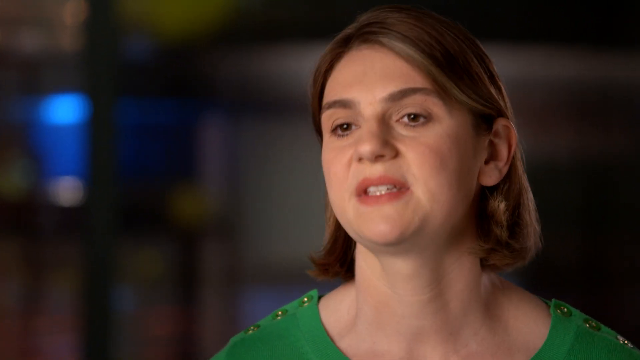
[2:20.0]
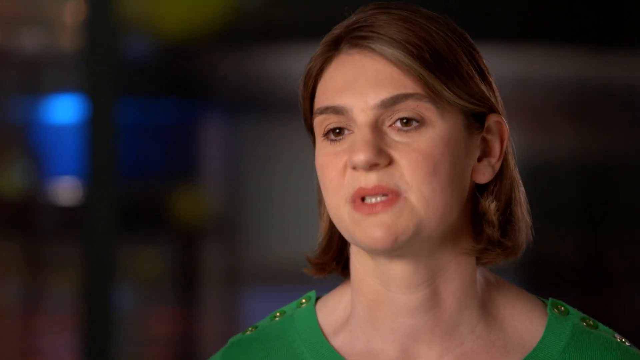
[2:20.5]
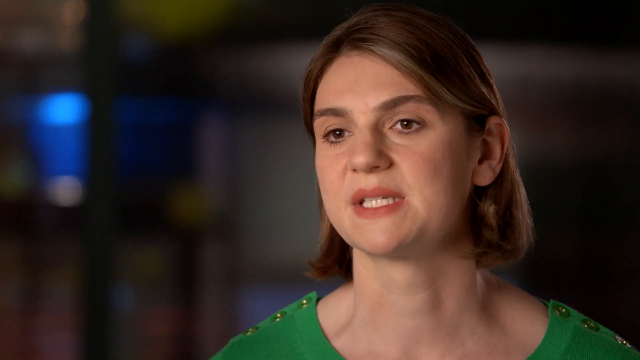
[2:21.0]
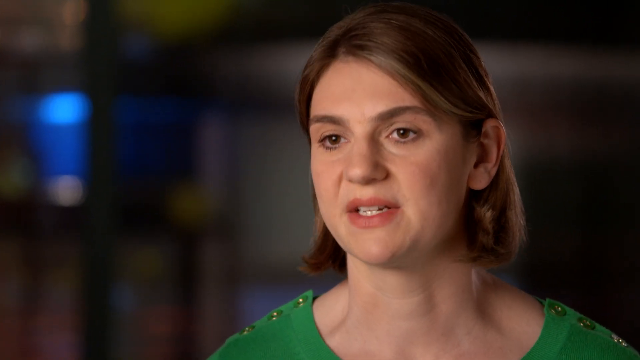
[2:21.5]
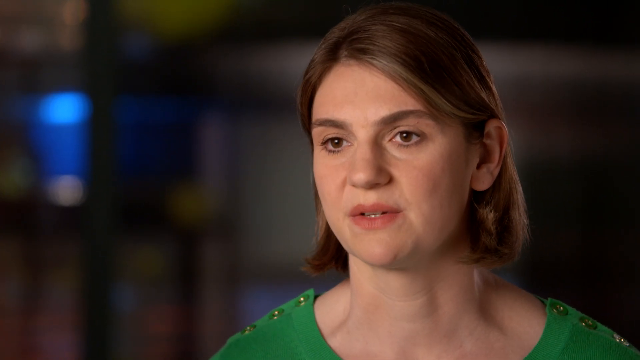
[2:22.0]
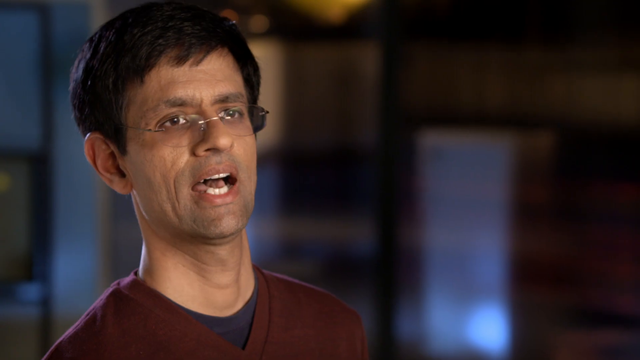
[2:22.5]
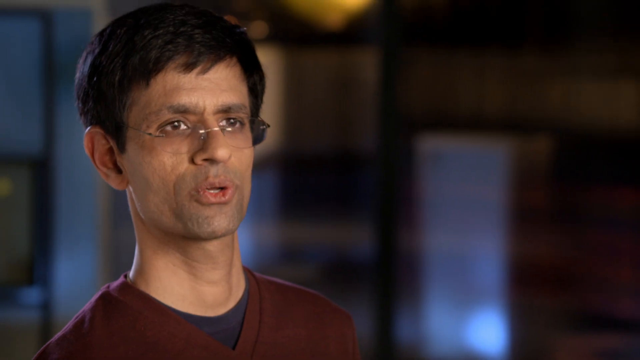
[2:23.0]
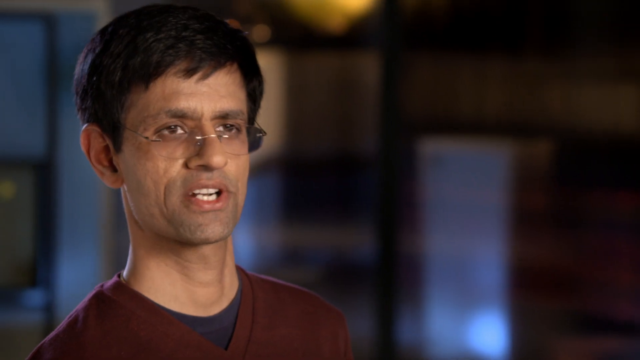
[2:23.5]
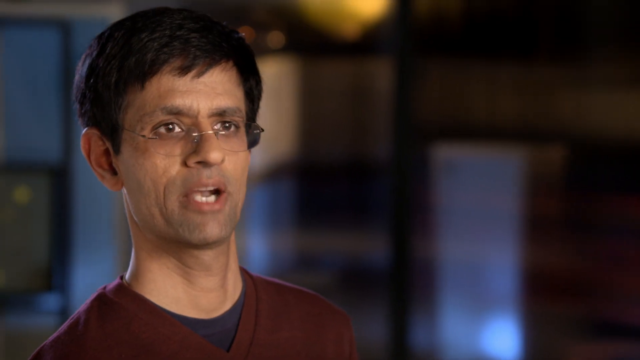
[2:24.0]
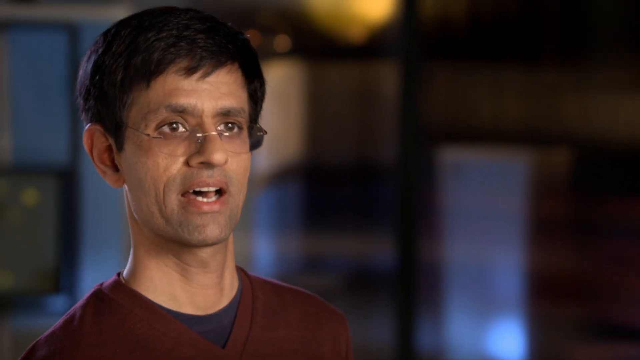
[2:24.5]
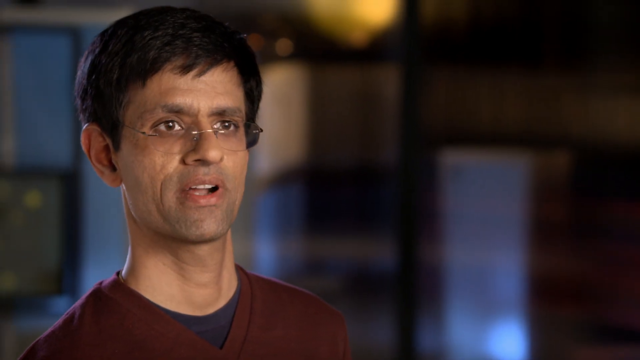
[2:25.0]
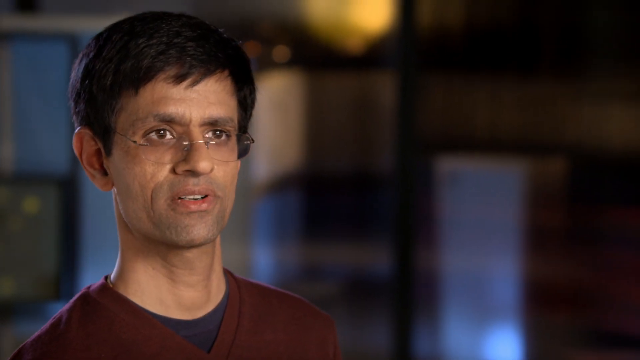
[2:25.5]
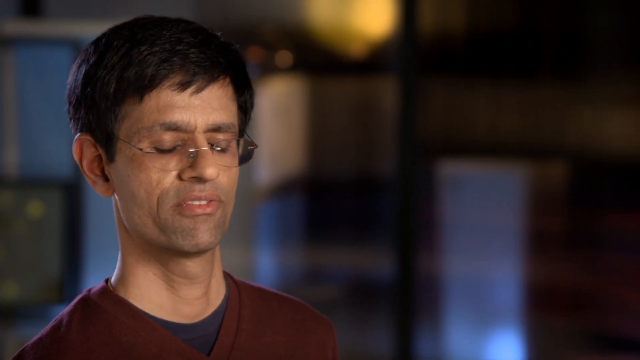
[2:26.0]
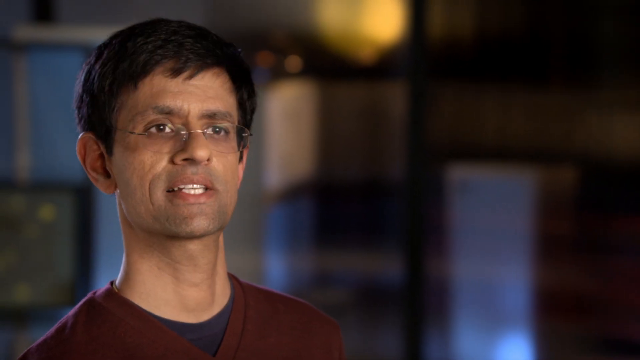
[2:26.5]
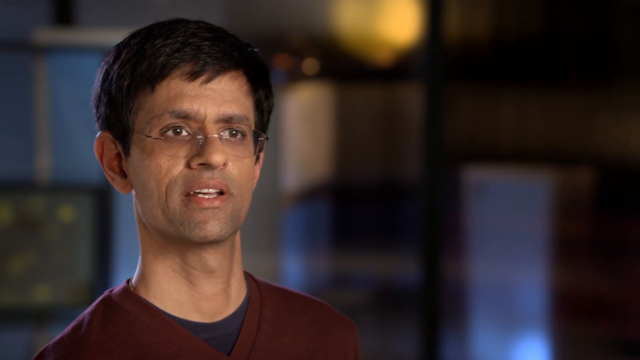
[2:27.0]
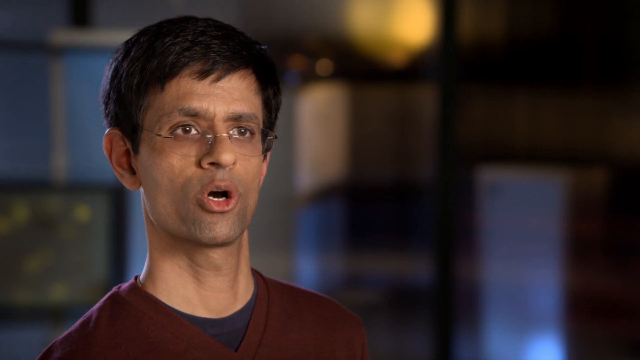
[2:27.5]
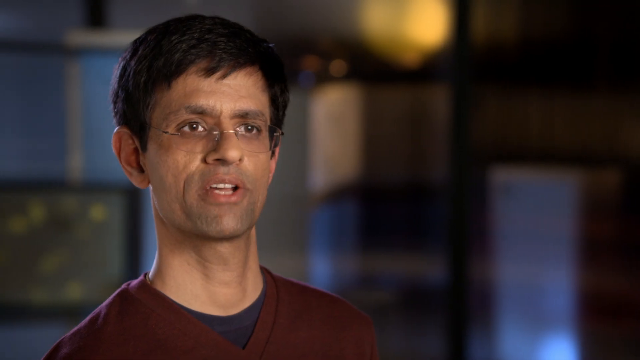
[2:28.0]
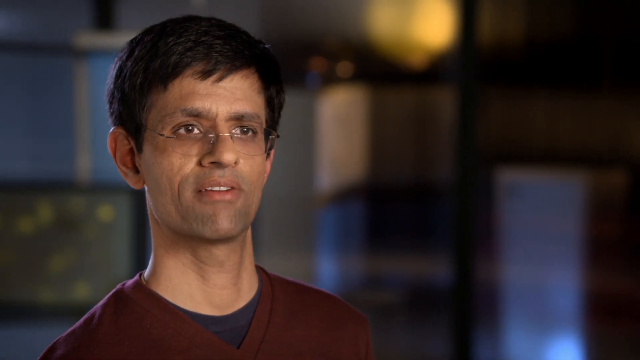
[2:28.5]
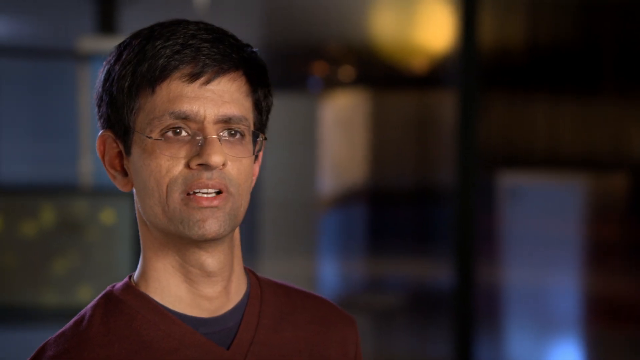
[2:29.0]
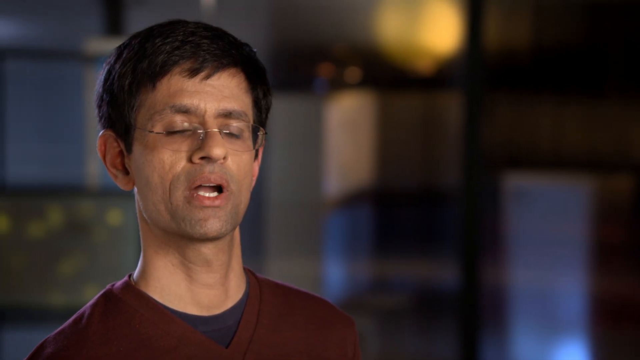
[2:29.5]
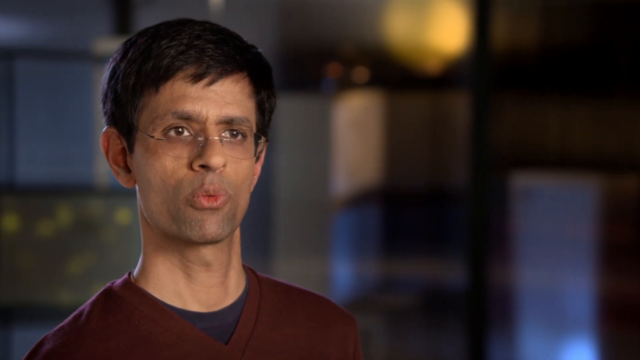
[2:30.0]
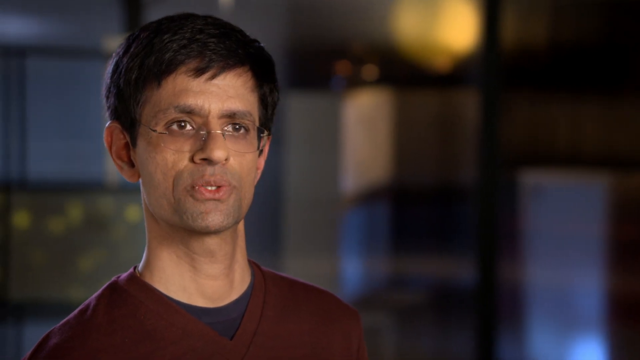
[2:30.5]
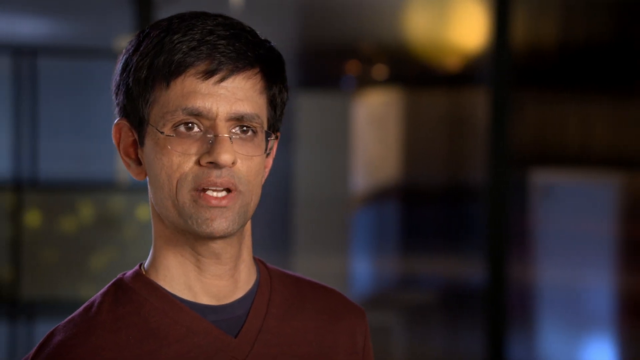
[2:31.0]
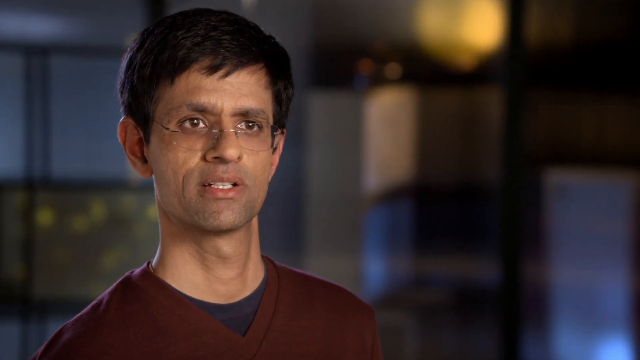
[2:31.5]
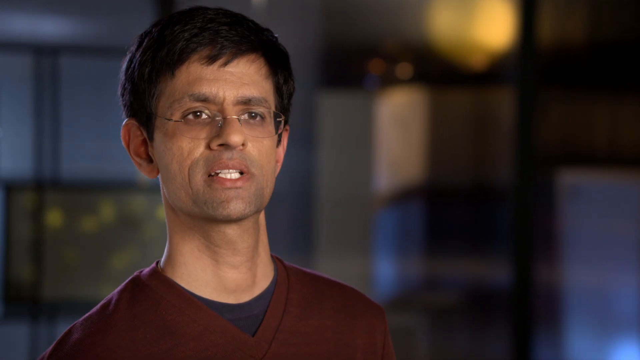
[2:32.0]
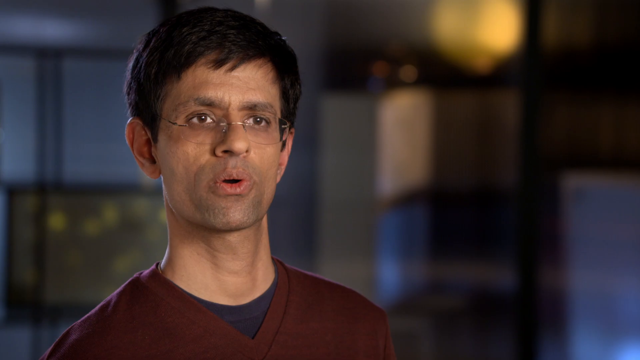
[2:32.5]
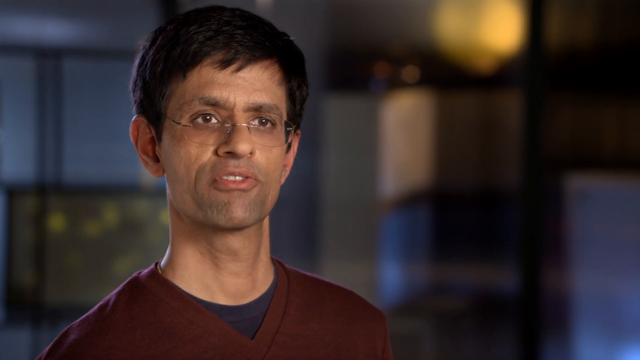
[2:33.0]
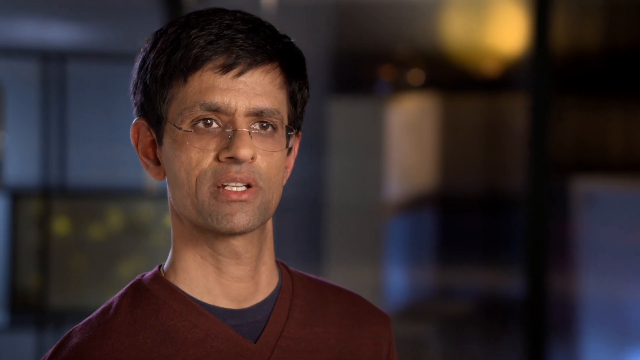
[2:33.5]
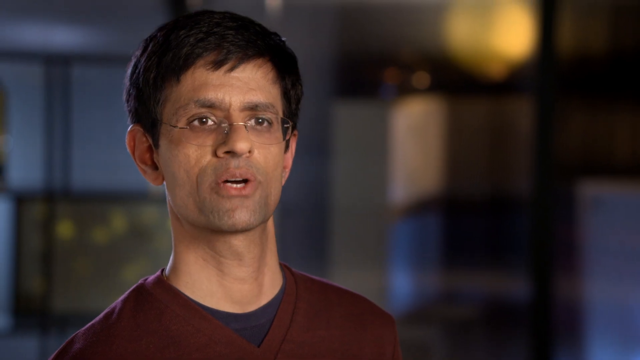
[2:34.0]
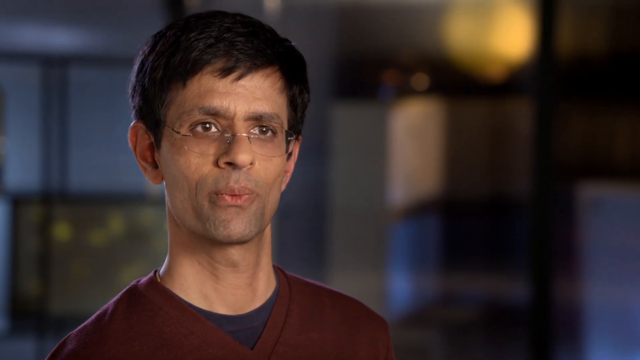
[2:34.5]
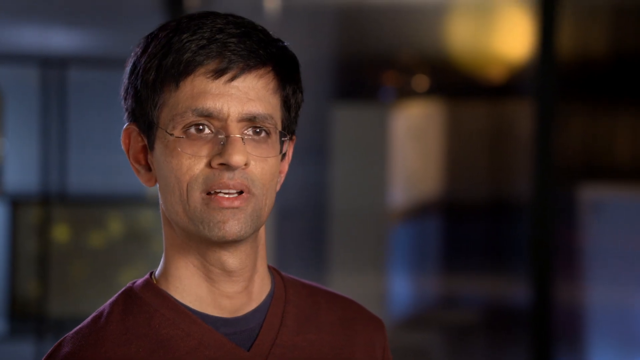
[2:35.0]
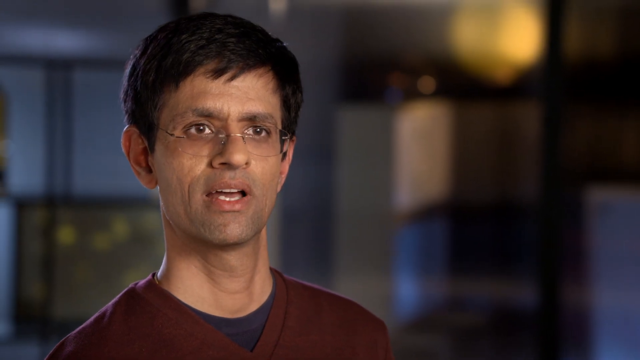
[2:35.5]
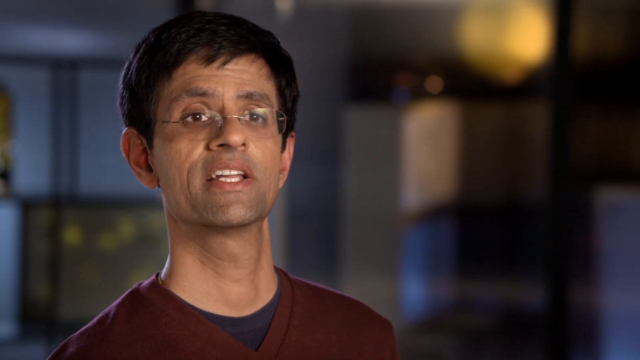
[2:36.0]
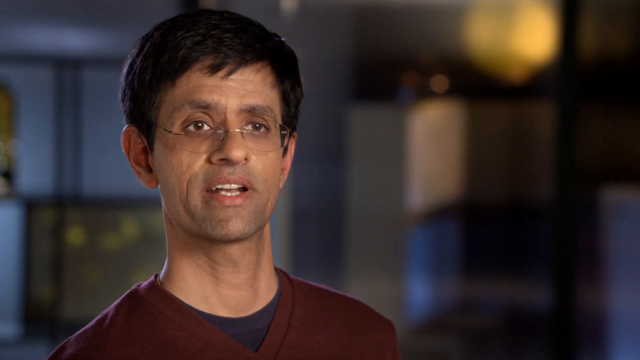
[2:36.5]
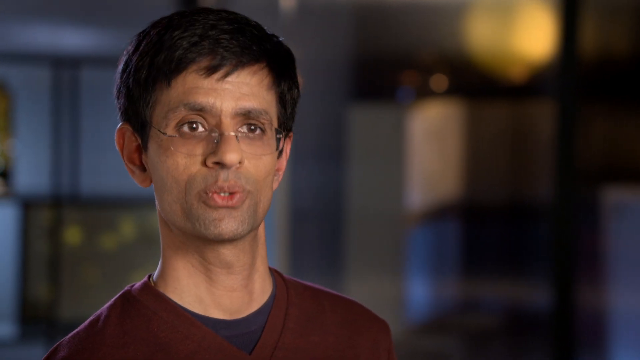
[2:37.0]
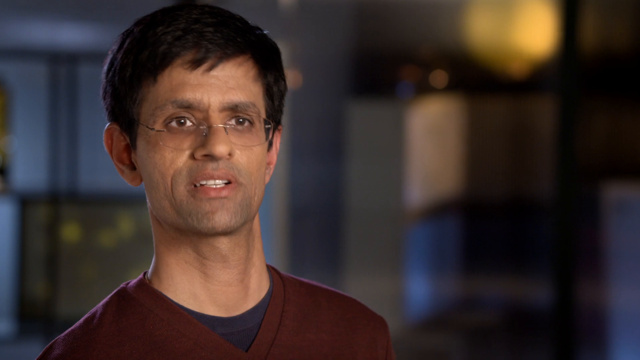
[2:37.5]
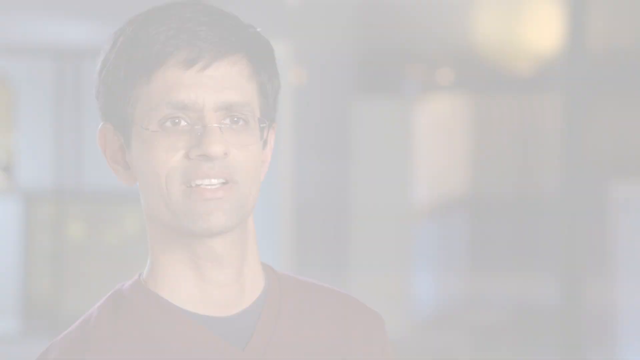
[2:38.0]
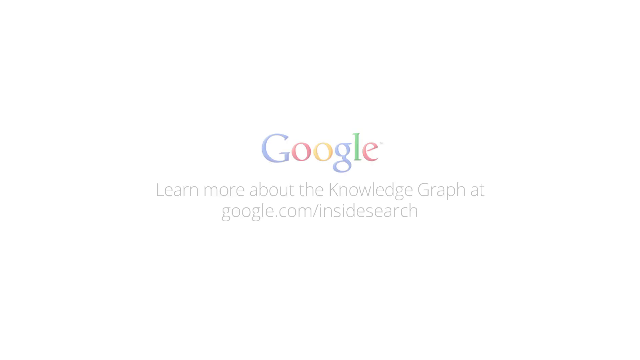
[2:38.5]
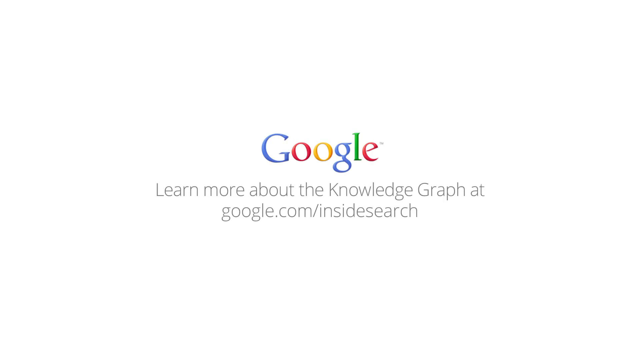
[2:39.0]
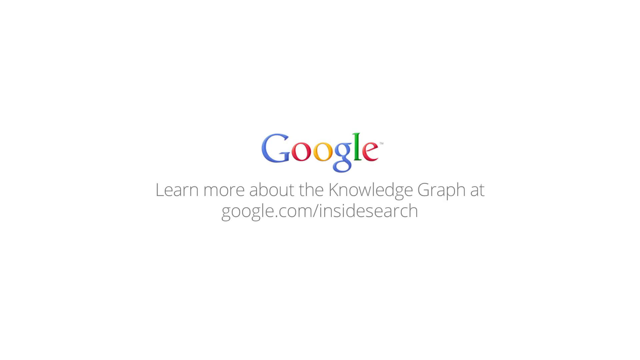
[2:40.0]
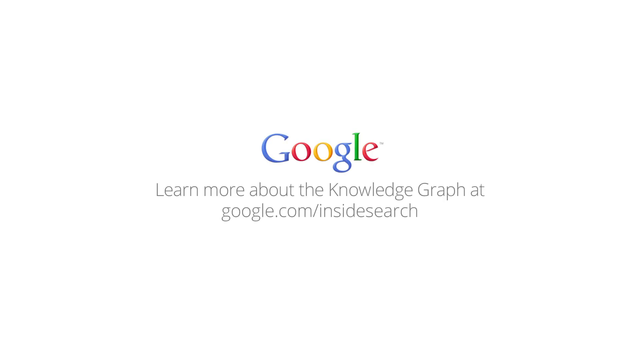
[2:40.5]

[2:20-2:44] A man with short brown hair and rimless glasses talks to the camera in a room with a dark, quite blurred background, with some yellow light at the top of the image and perhaps some shelves off to the right. He wears a maroon crew-neck long-sleeve shirt or sweater, is clean-shaven, and has dark eyebrows and light brown skin. The room is mostly grey and beige but so blurry that none of its features are distinct. This fades to a white screen with the Google logo in blue, red, yellow and green letters and thin grey text that says "Learn more about the knowledge graph at google.com/inside search".